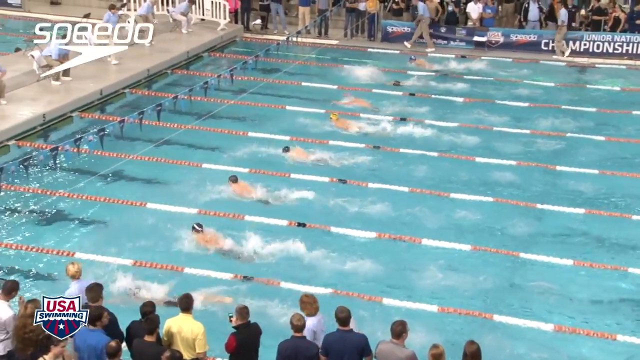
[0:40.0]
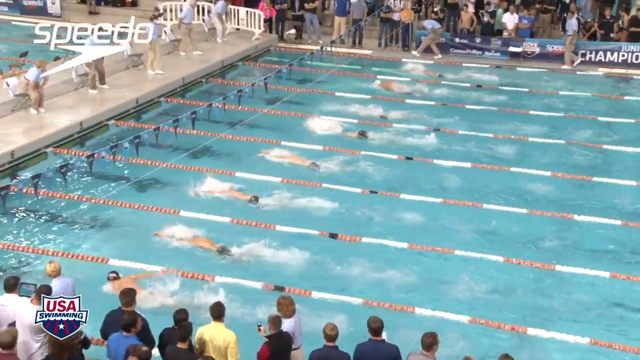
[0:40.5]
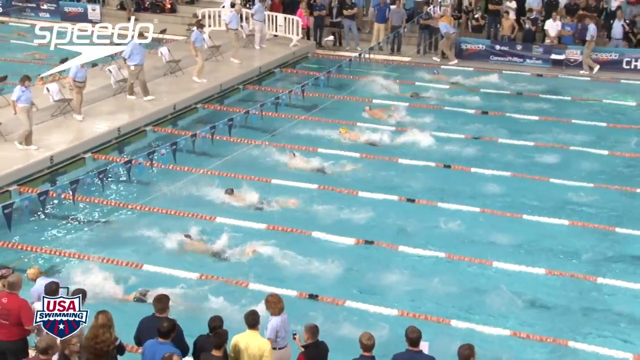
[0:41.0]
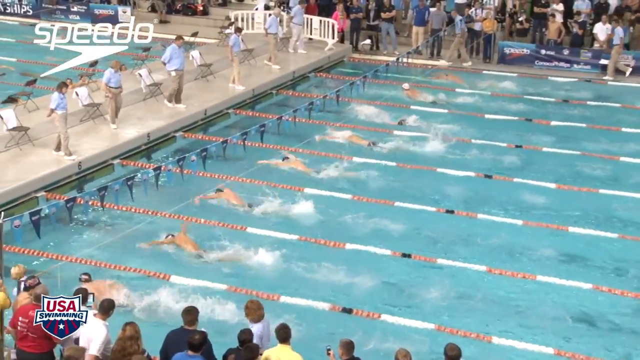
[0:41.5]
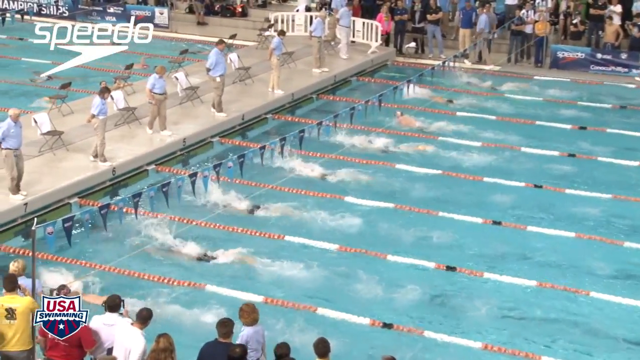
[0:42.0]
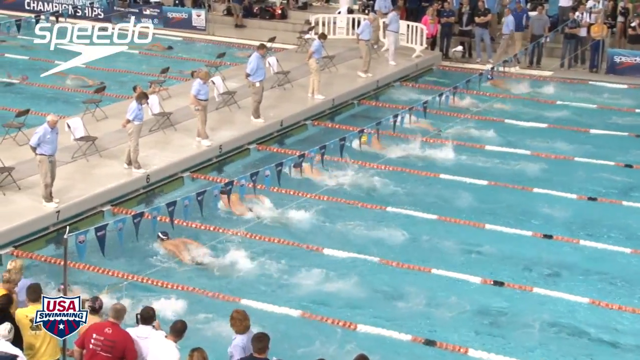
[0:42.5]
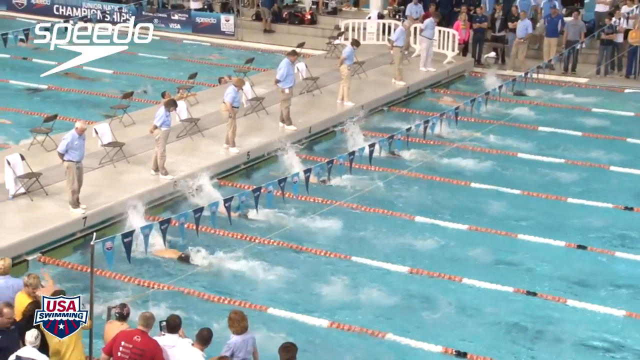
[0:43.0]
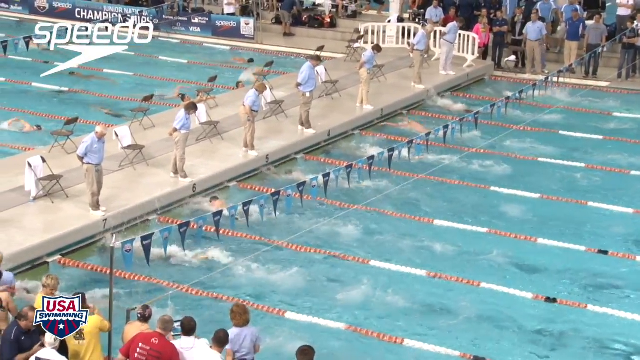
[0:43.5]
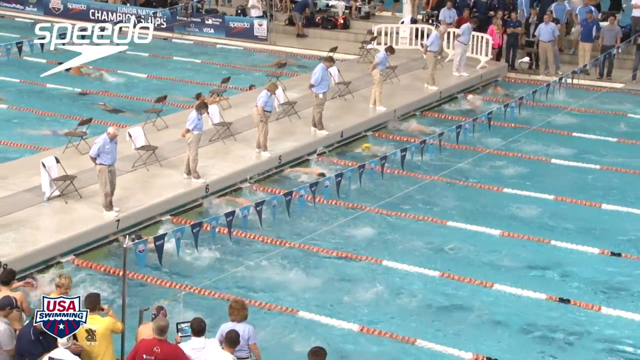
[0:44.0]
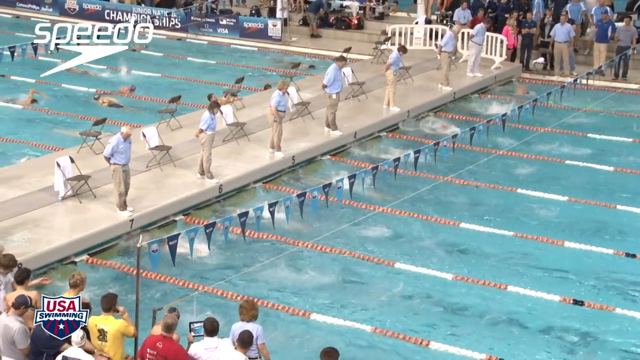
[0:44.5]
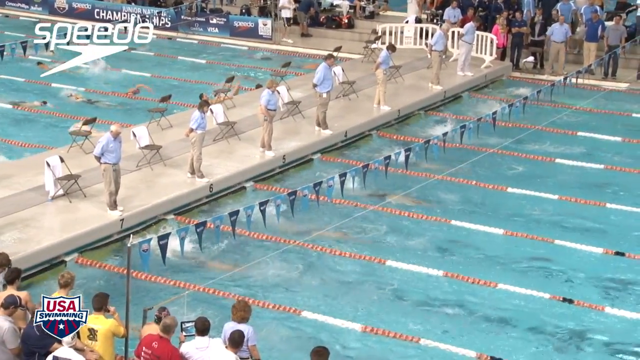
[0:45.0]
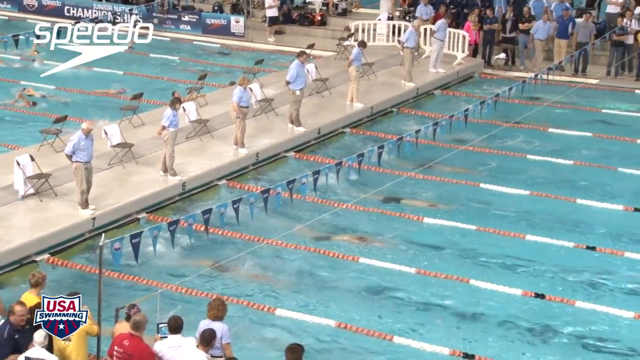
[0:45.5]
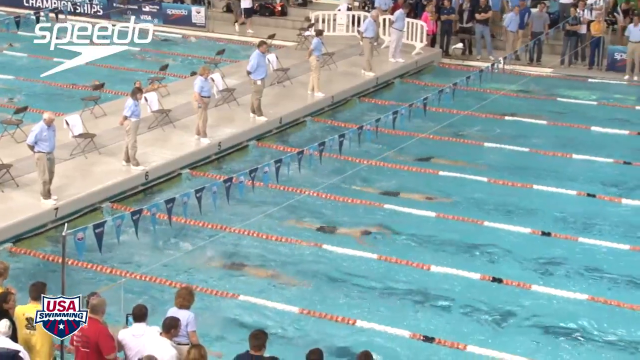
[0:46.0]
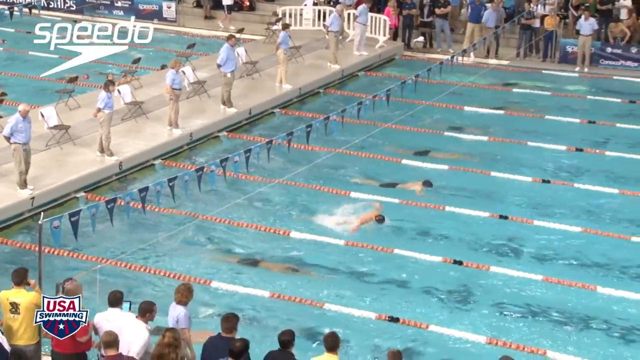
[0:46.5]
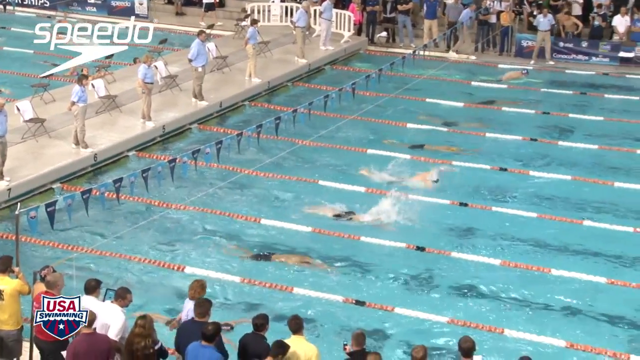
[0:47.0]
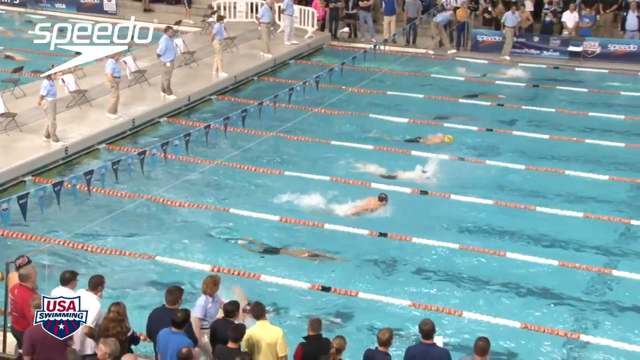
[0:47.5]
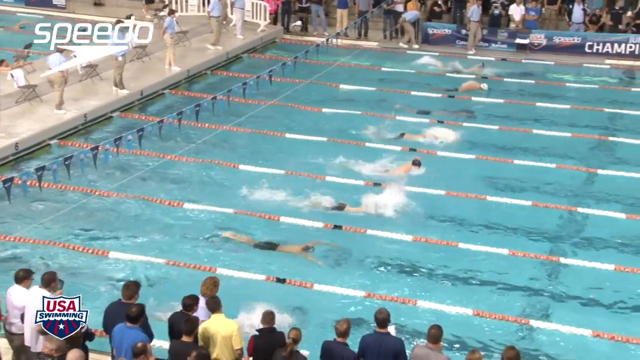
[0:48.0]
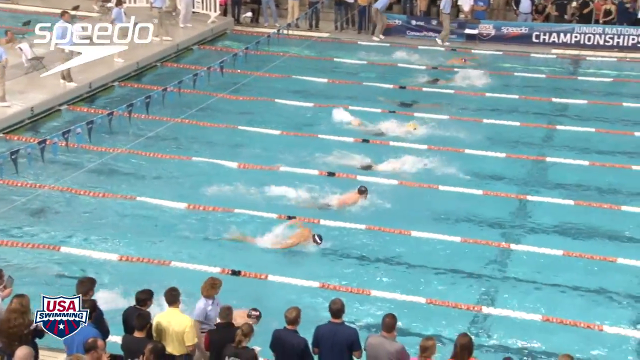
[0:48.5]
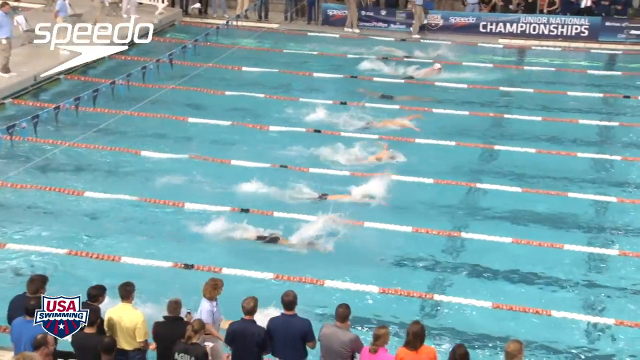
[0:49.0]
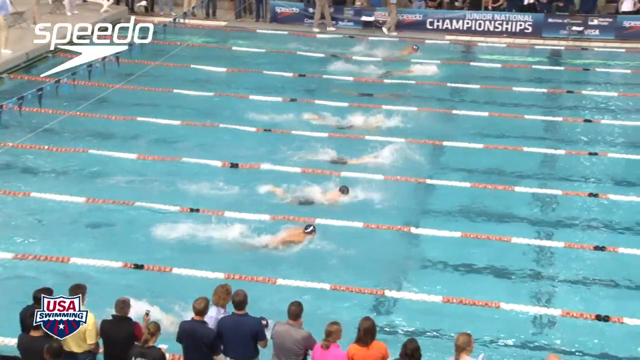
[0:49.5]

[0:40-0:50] An overhead view shows the pool, which looks to be a professional one, probably of Olympic stature. The swimmers reach the other side of the pool, touch, and head back to where they came from. There are onlookers, and referee safety people are on the edge of one end. Numbers are listed on the ends, including a six, a five and a four. On the sides, people dressed like the referees constantly walk back and forth watching the swimmers.